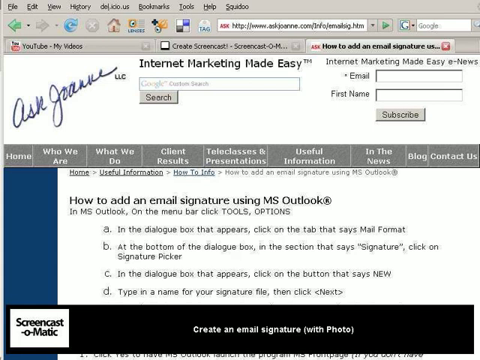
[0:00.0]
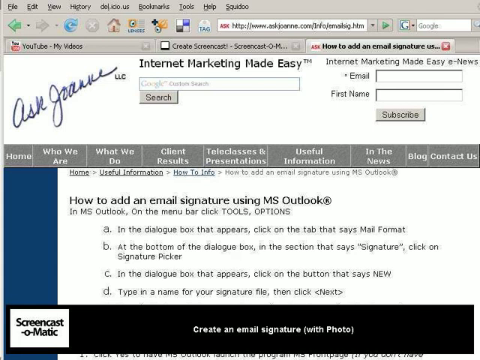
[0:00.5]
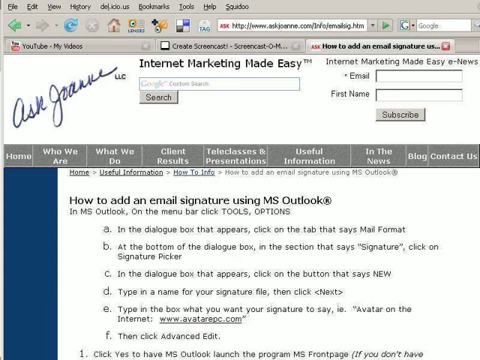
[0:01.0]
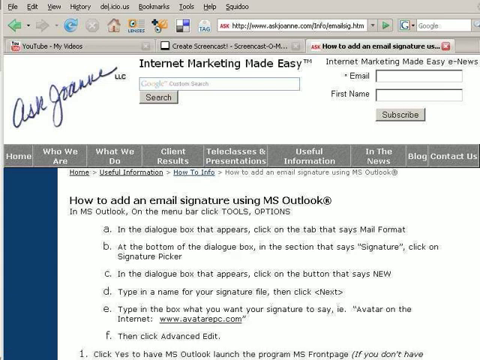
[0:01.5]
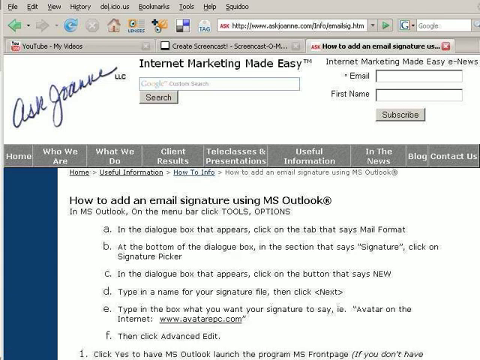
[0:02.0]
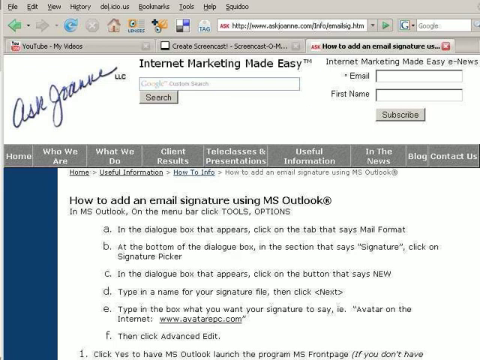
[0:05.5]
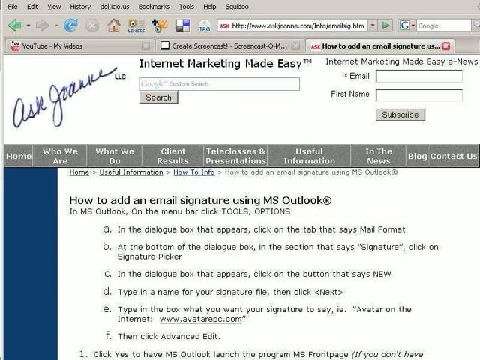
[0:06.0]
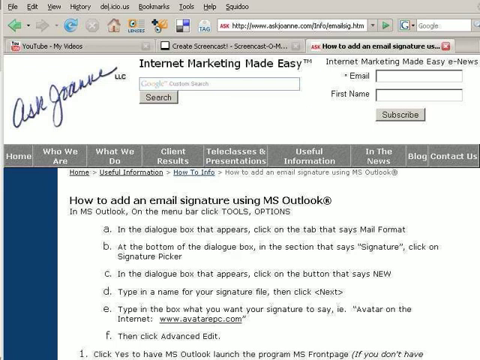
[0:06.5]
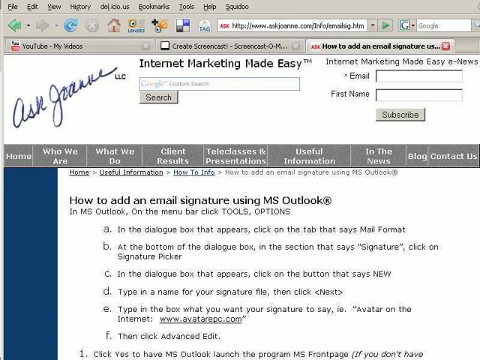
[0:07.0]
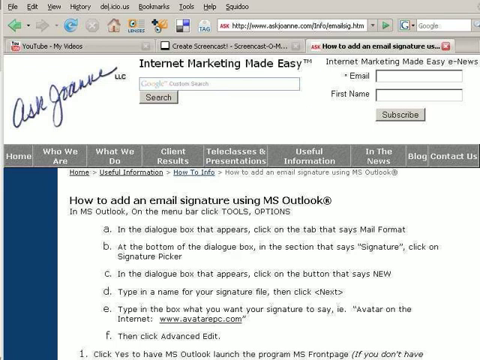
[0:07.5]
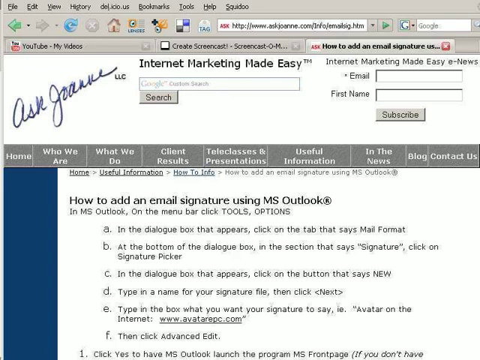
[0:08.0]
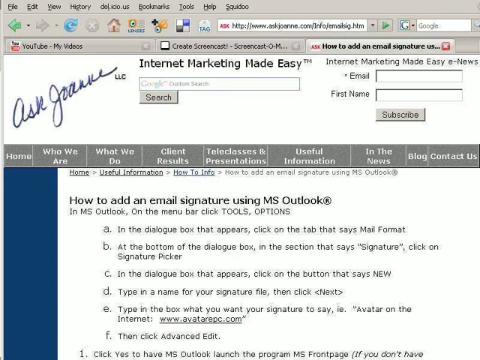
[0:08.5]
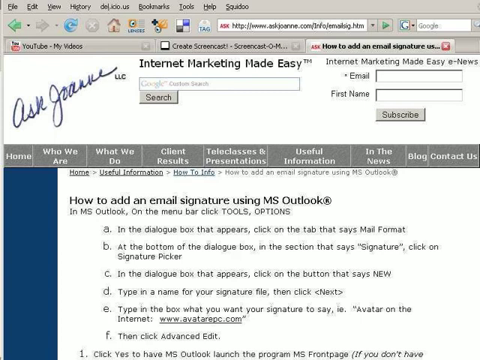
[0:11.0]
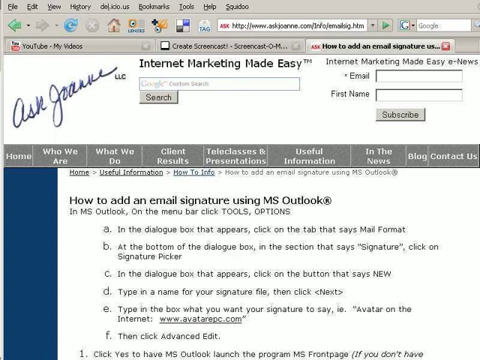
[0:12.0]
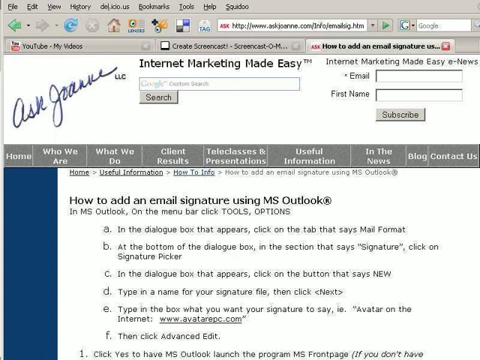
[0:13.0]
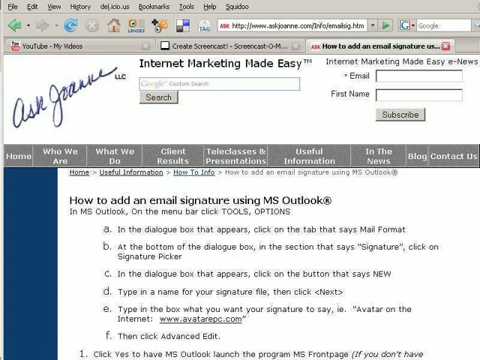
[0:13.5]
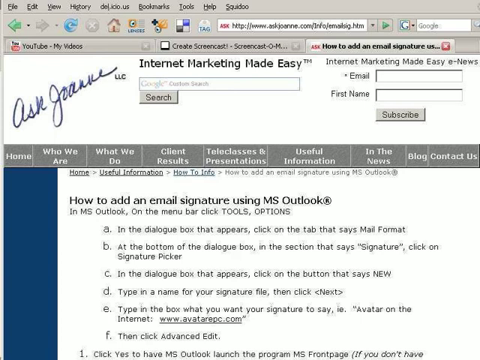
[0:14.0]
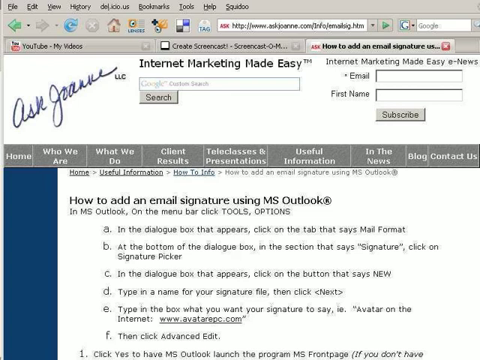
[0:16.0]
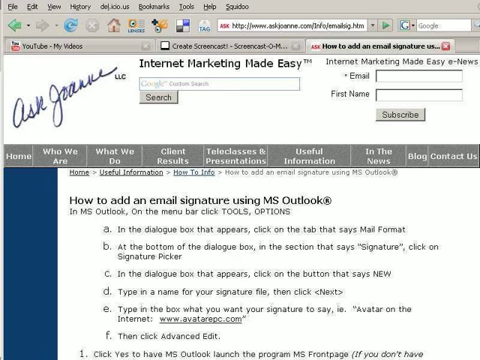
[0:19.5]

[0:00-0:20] A single, unmoving screen shows a page called Ask Joanne, Internet Marketing Made Easy, with how-to information on adding an email signature using MS Outlook. The instructions read: "In MS Outlook, on the menu bar, click Tools, Options. In the dialog box that appears, click on the tab that says Mail Format. At the bottom of the dialog box in the section that says Signature, click on Signature Picker. In the dialog box that appears, click on the button that says New. Type in a name for your signature file, then click Next. Type in the box what you want your signature to say." There is not much else on the page. Other tabs are open in the background, including YouTube and a page called Create Screencast.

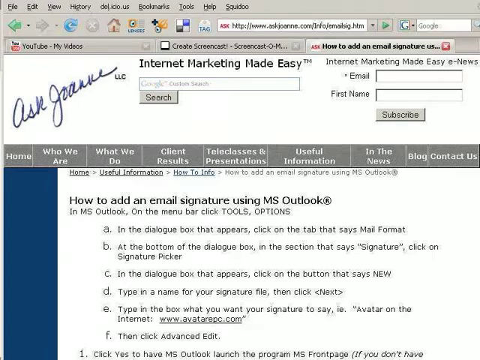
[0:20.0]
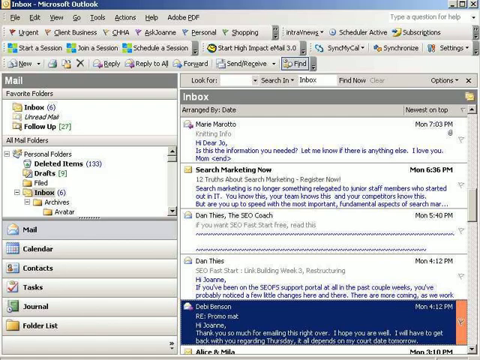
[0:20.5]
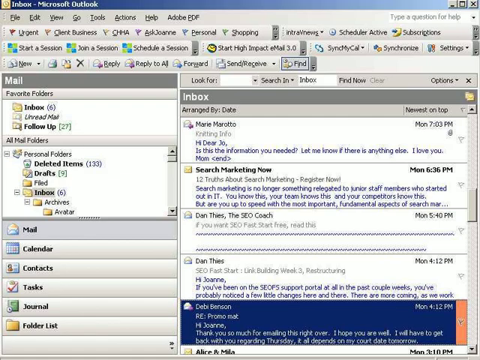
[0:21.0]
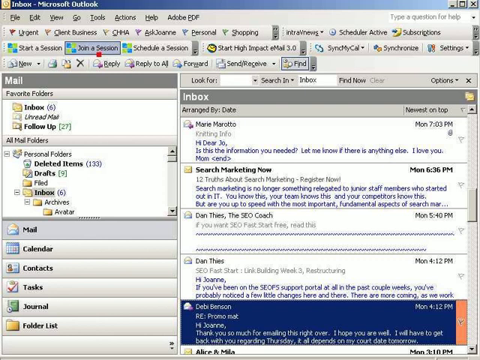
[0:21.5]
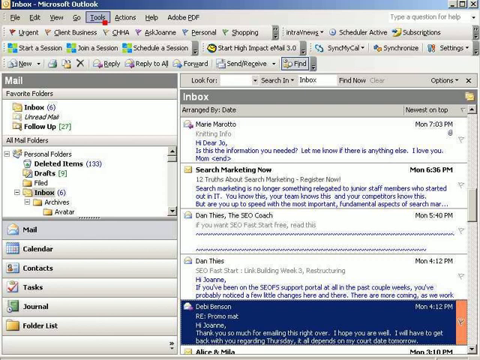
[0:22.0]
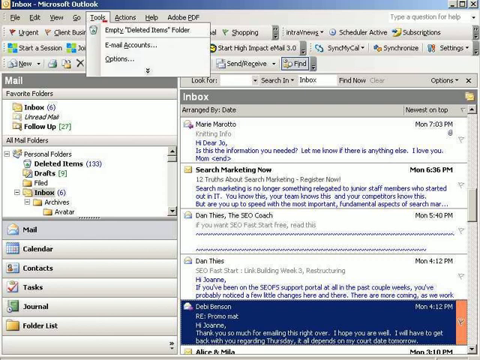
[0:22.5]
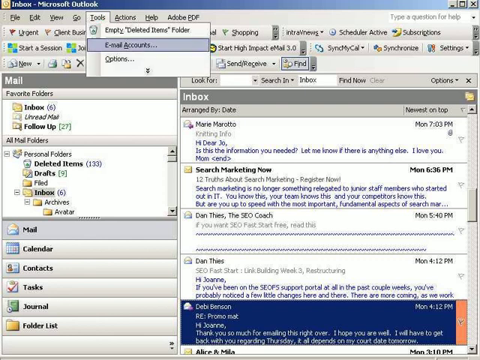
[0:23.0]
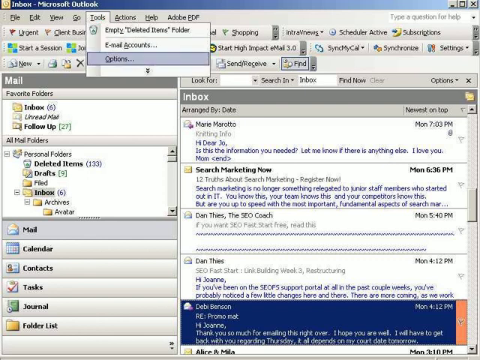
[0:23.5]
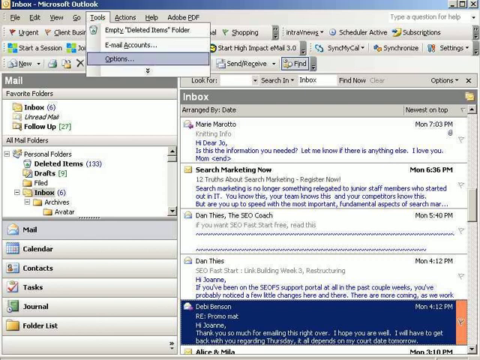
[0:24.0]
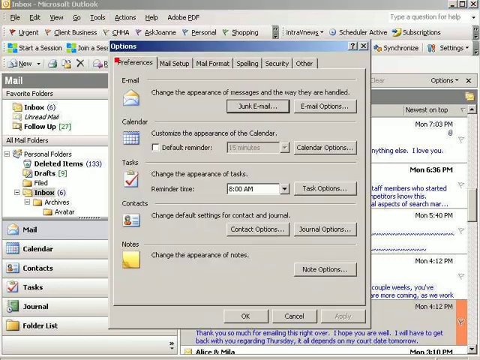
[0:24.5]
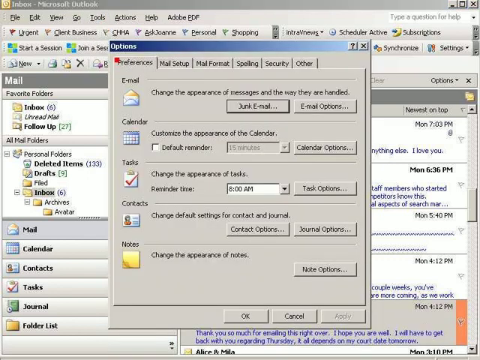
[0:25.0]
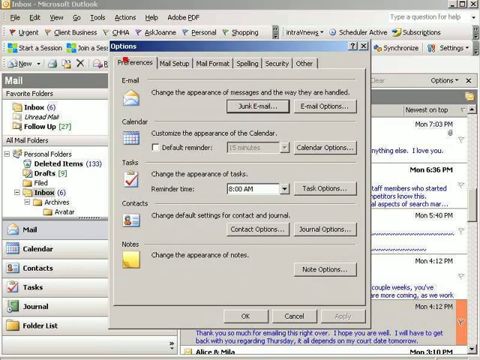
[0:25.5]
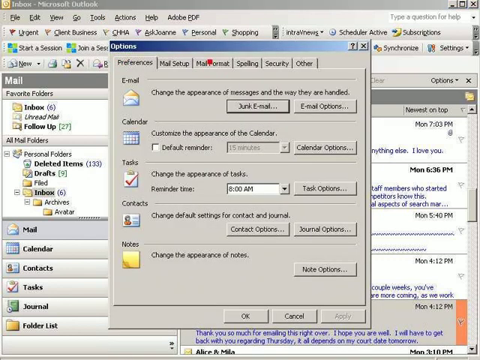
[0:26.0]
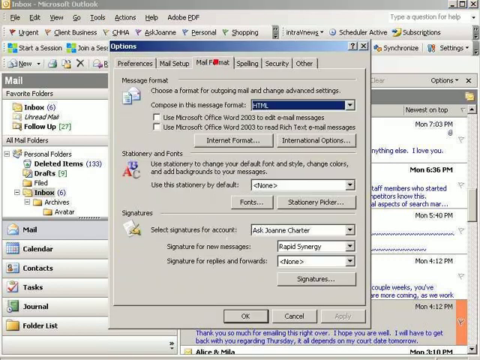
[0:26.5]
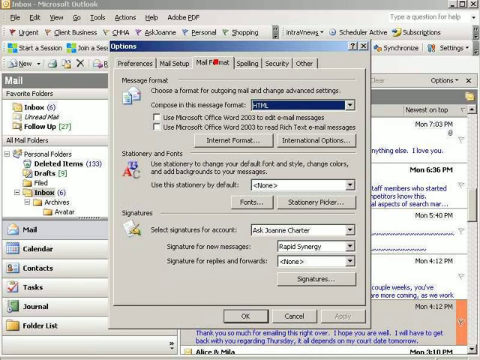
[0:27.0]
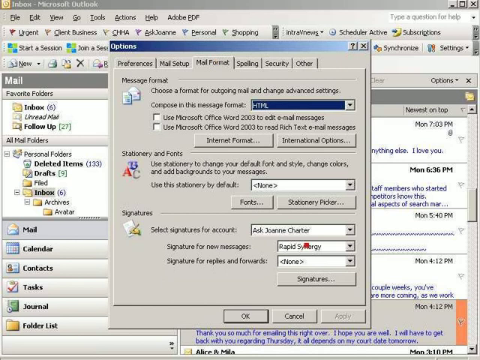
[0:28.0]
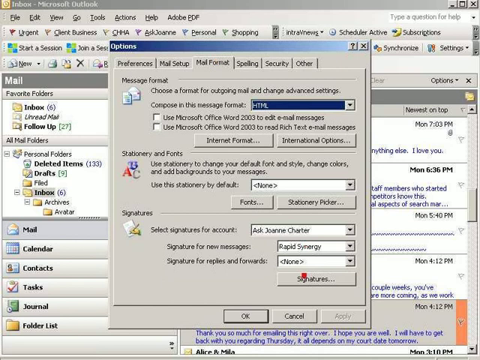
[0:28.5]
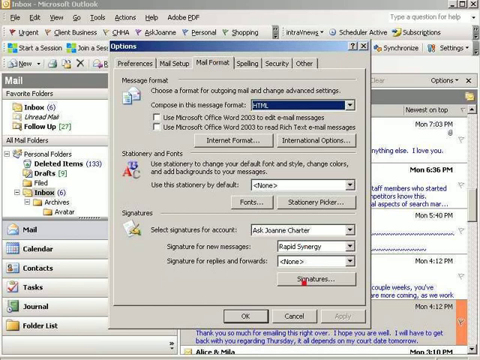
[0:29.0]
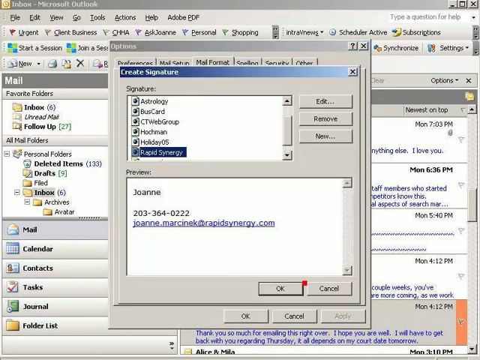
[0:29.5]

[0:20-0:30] The user goes through the instructions from the Ask Joanne page: they open Microsoft Outlook, click Tools and then Options, go to the Mail Format tab, and then open Signatures. The view then goes back to the original Ask Joanne page of instructions, so the same page appears before and after the demonstration.